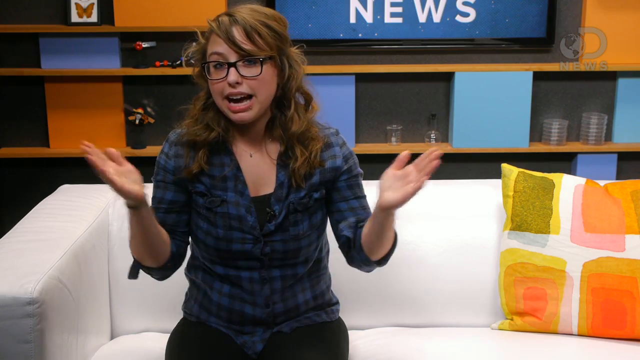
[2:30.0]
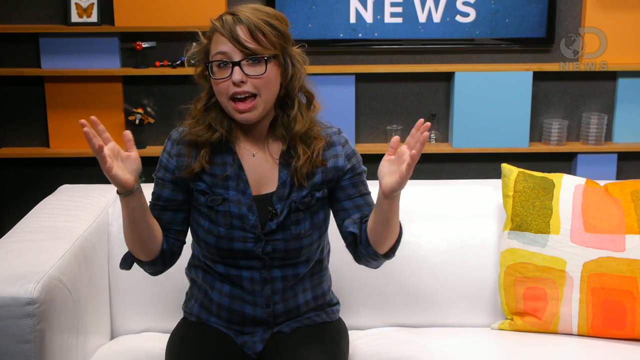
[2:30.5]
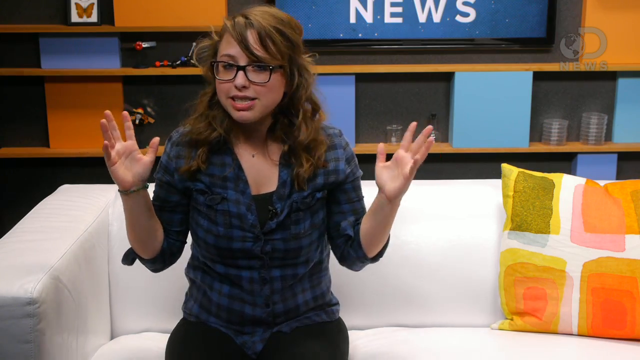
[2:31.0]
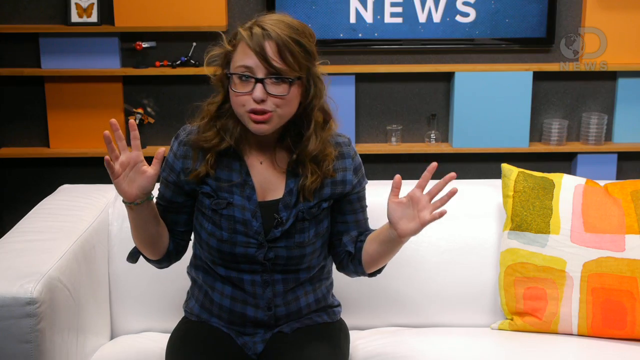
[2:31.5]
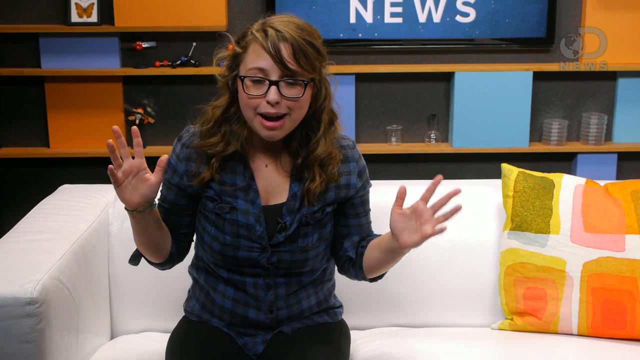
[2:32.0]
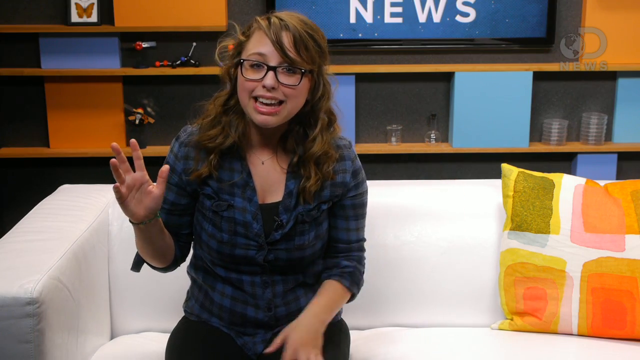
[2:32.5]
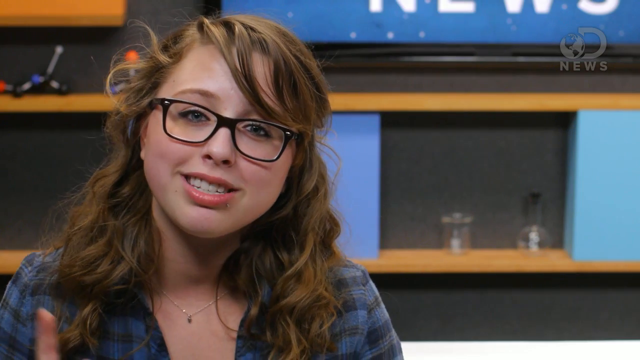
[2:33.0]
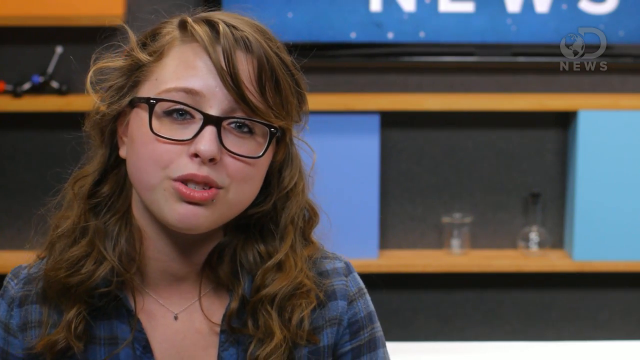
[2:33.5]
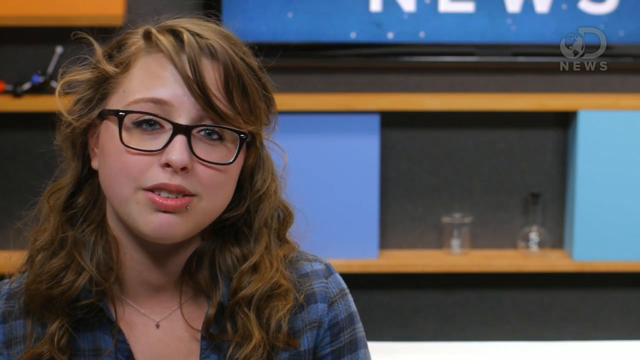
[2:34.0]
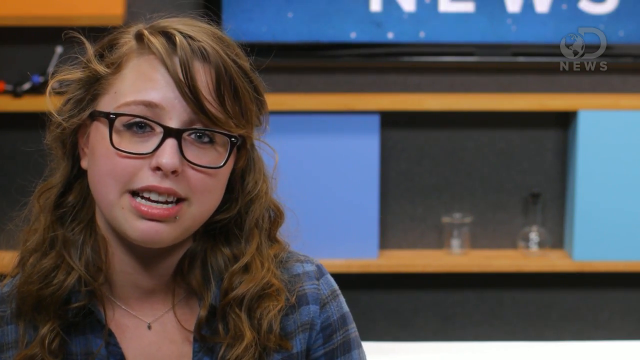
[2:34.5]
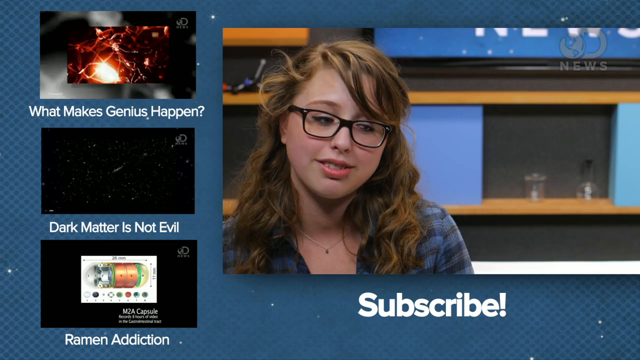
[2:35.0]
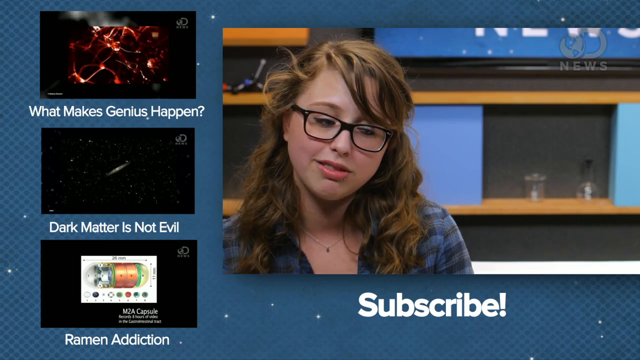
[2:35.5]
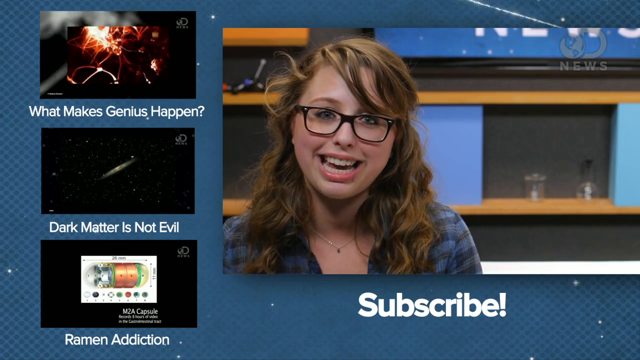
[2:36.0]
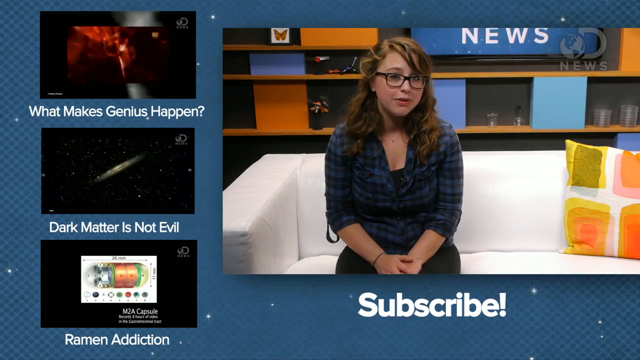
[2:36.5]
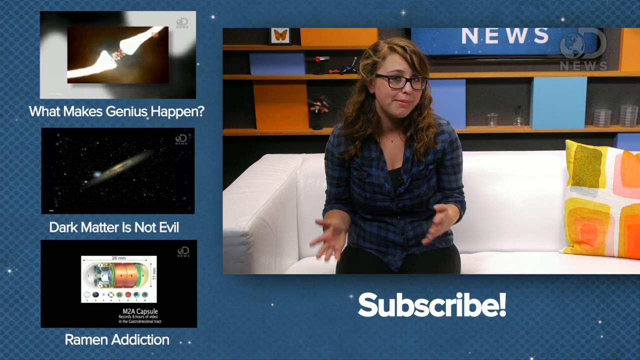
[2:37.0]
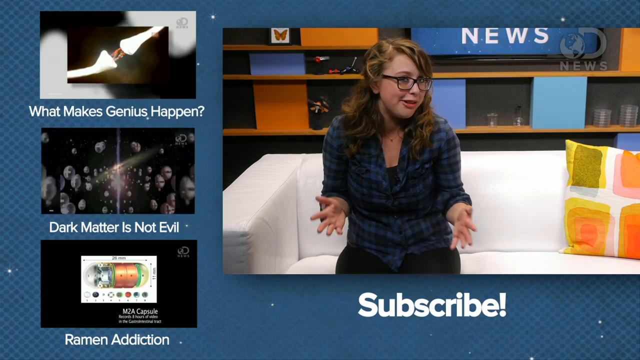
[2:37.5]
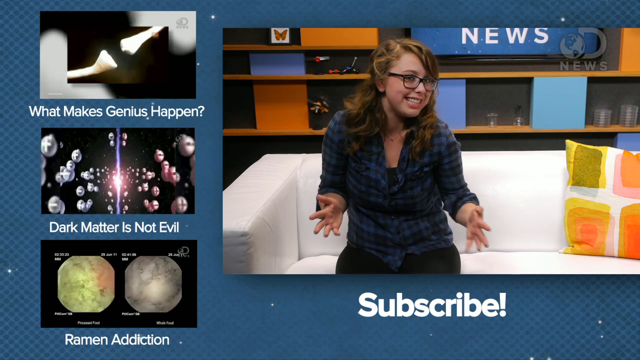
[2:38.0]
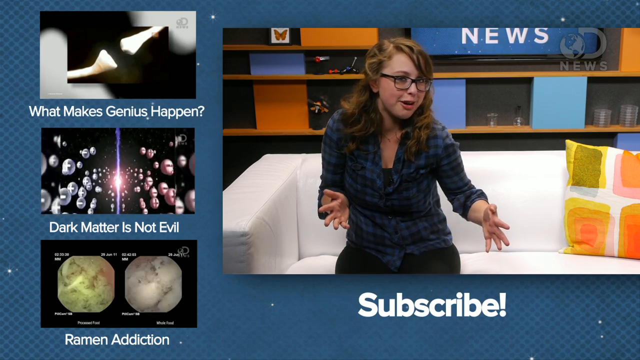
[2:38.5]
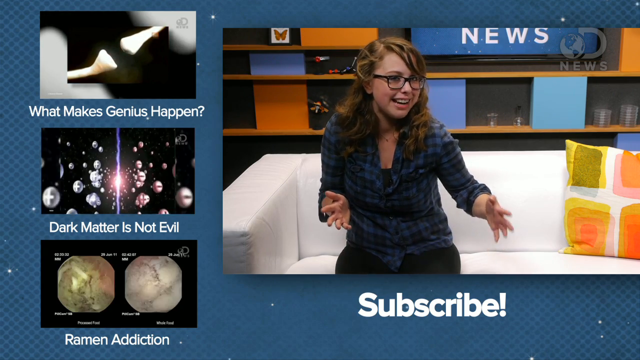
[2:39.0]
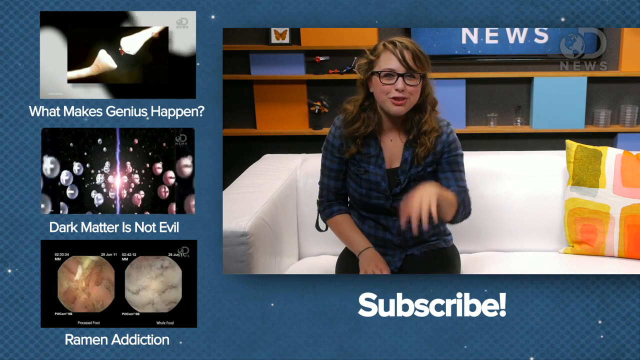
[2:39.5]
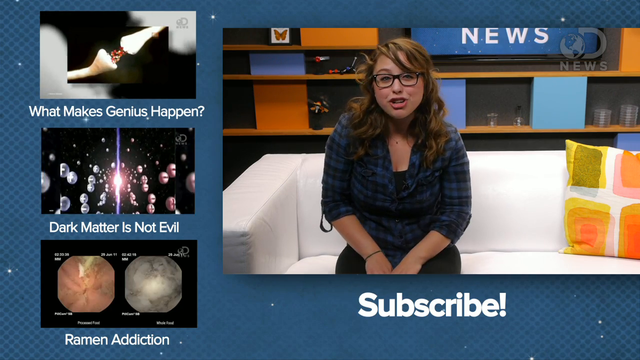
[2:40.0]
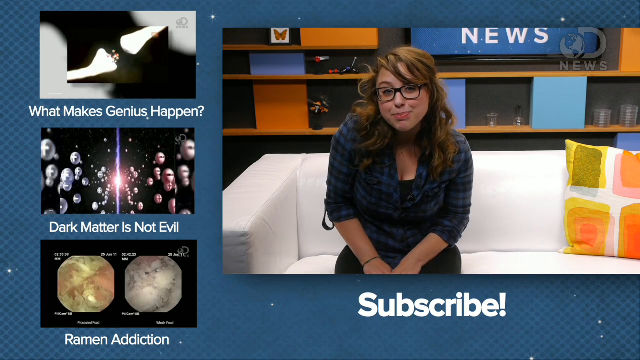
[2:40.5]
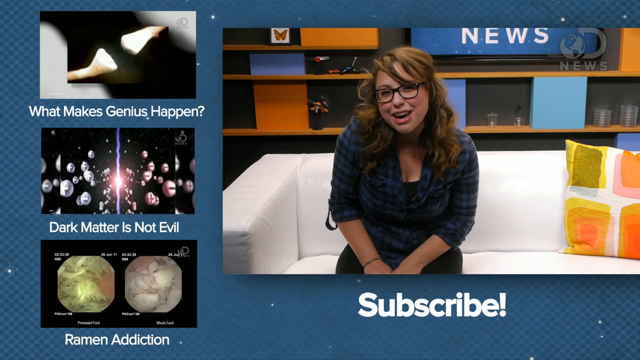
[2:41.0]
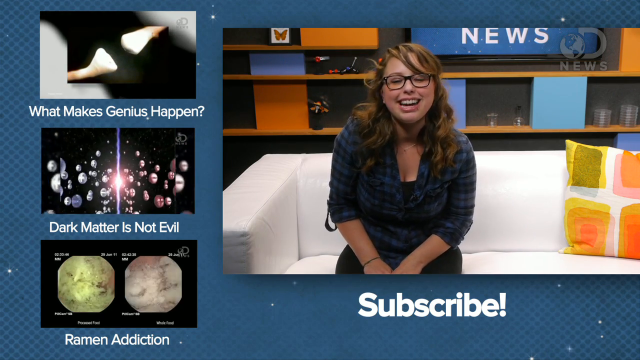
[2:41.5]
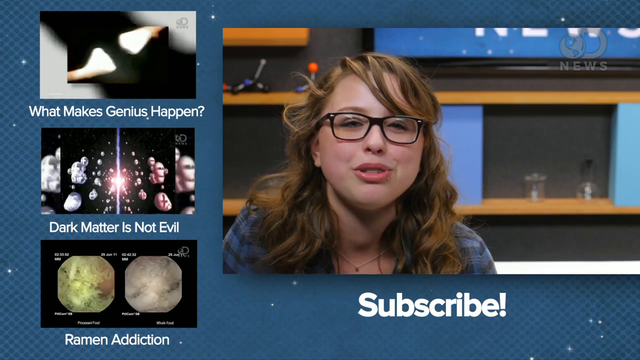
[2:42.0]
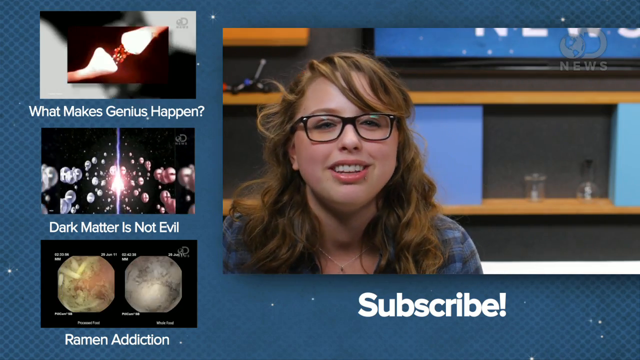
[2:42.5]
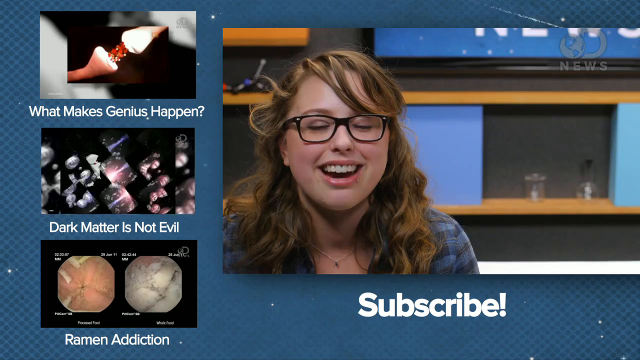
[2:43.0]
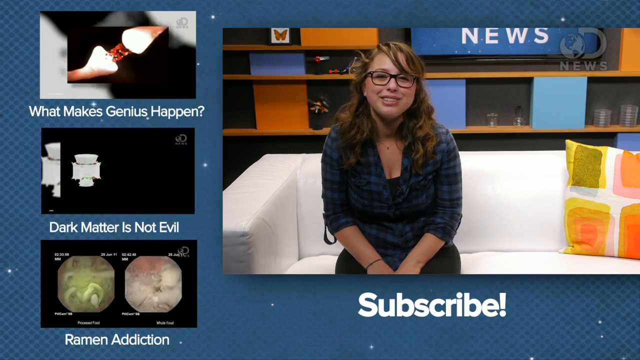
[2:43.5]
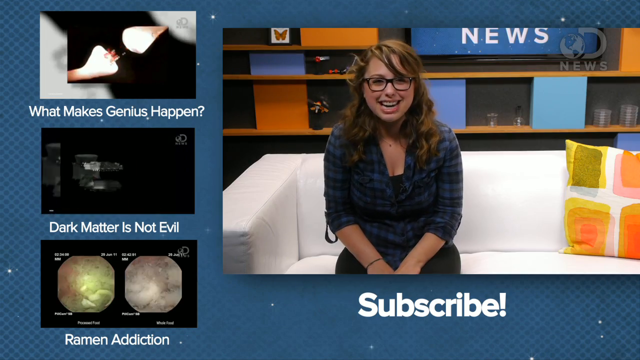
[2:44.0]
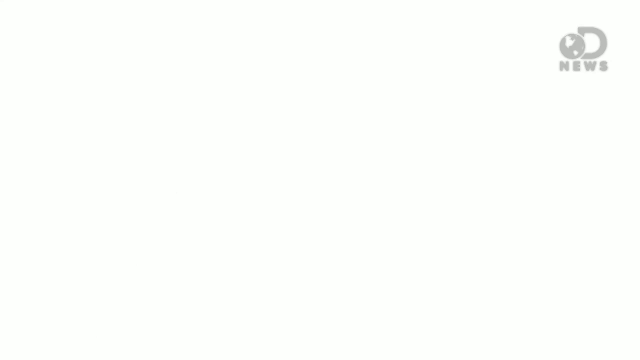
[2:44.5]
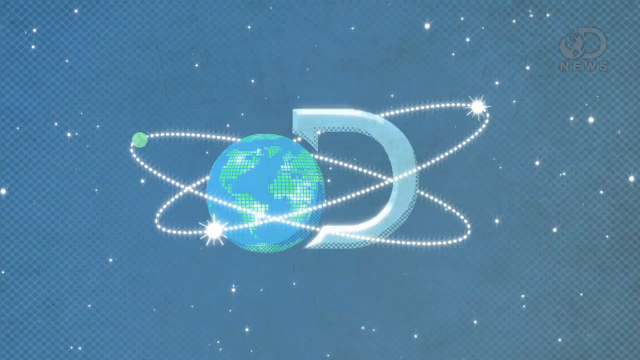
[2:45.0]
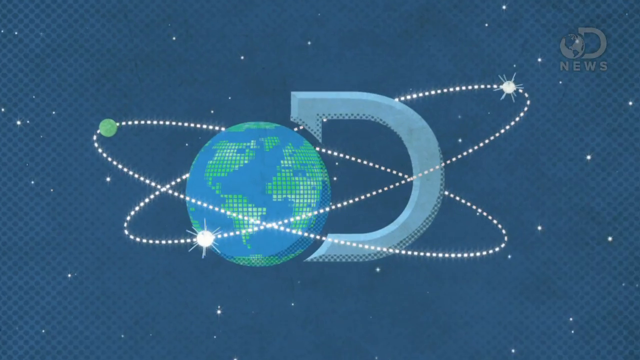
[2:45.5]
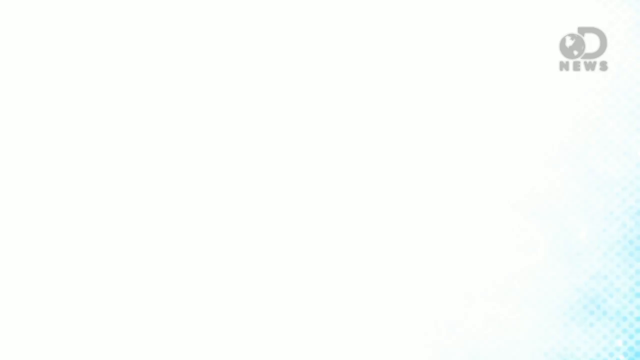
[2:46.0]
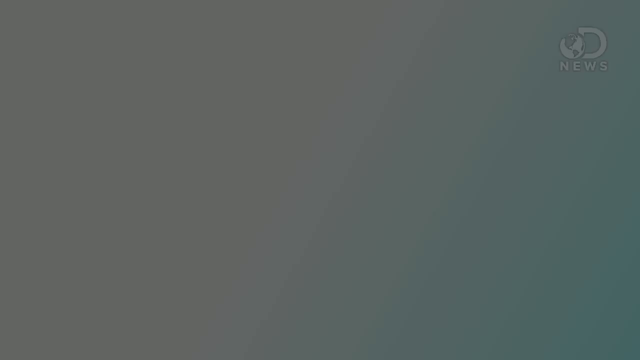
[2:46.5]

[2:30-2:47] A woman sits on a white couch, smiling happily and kind of talking with her hands. She wears black-rimmed glasses and has brown curly hair with some side bangs swept off to the side. In the background a couple of video clips are running; one is maybe showing synapses in the brain. Text says "dark matter is not evil", and in one of the middle videos lots of little blobs run toward the center of the picture. The wall in the background has a lot of shelves, with a TV screen on top that says "news". There are also orange colors in the background, a butterfly, and some protons and neutrons.